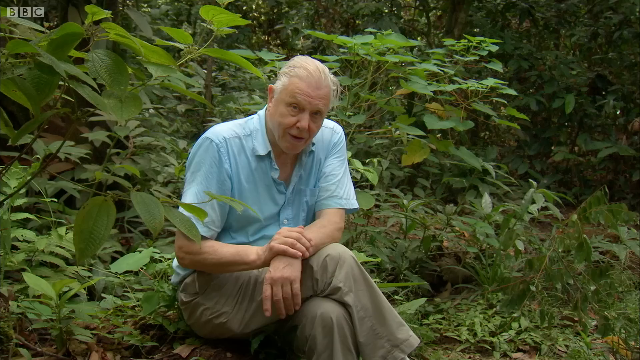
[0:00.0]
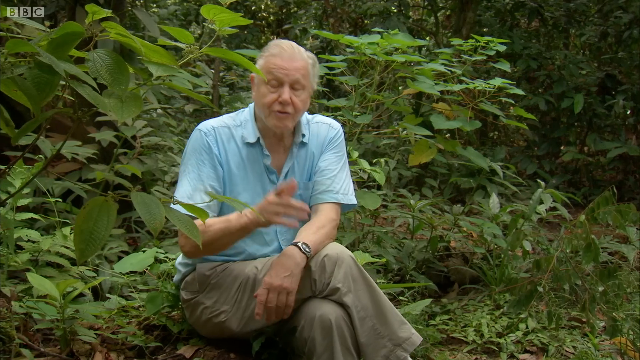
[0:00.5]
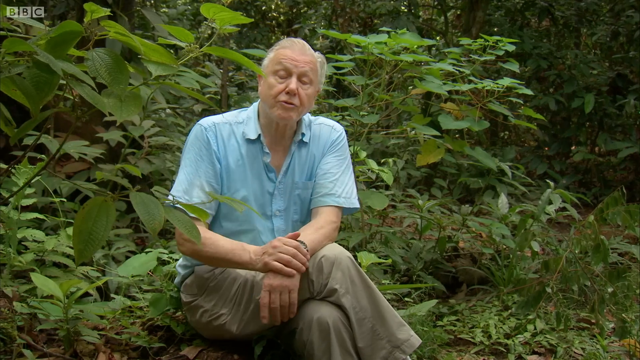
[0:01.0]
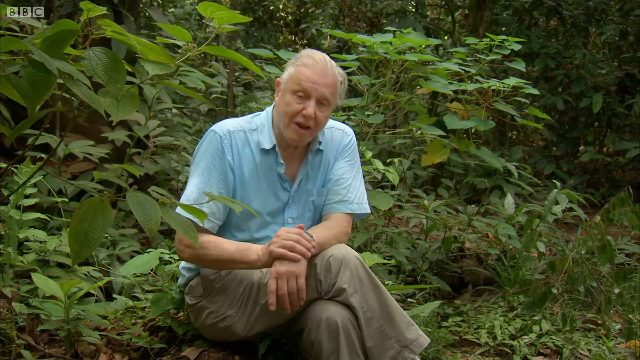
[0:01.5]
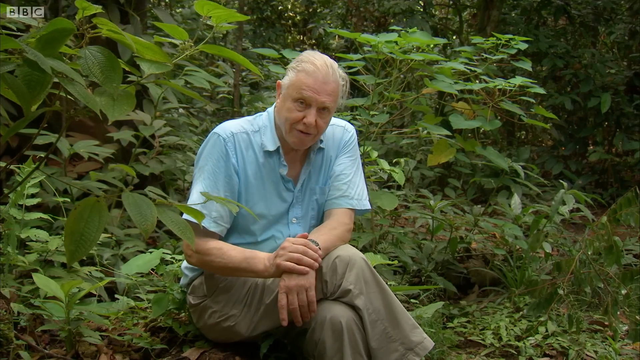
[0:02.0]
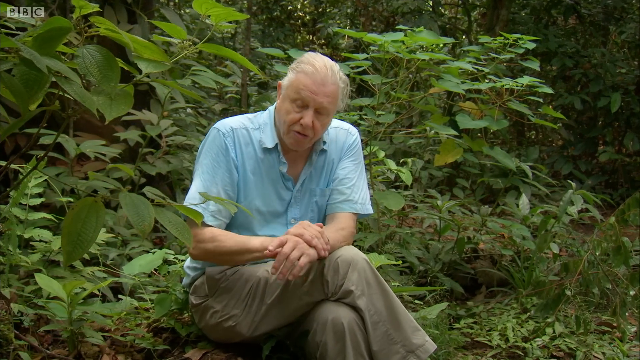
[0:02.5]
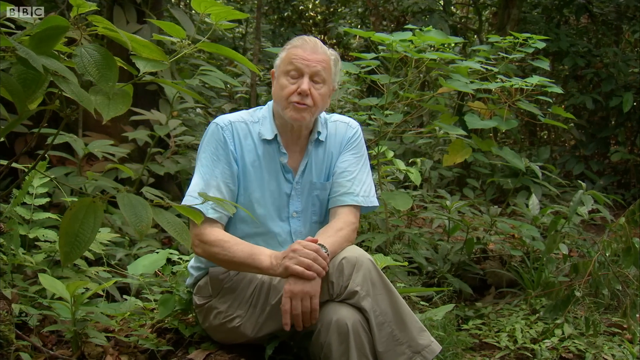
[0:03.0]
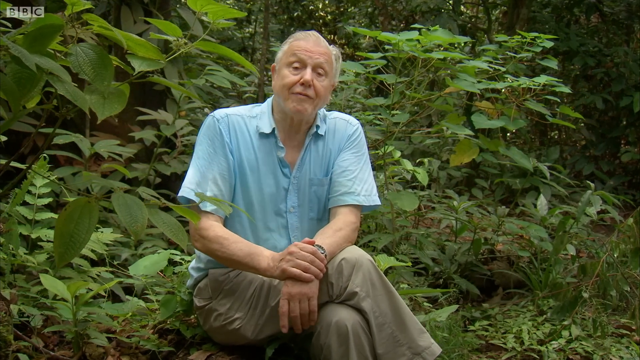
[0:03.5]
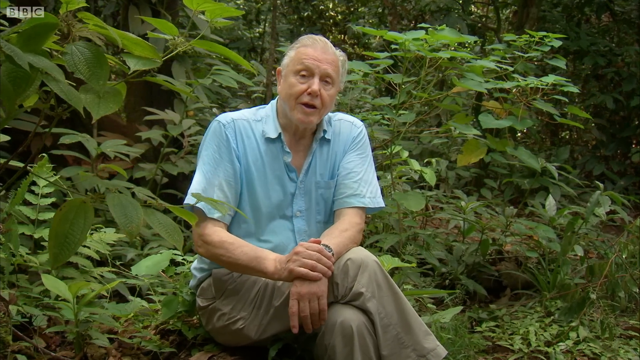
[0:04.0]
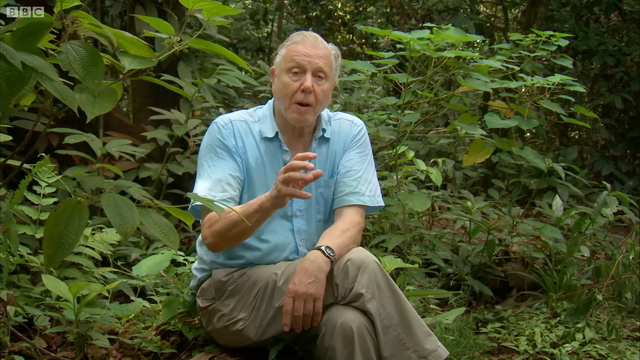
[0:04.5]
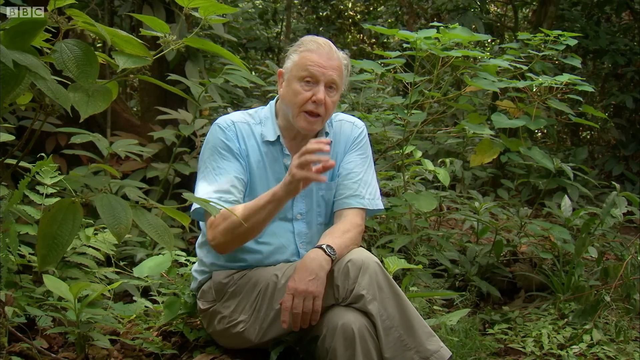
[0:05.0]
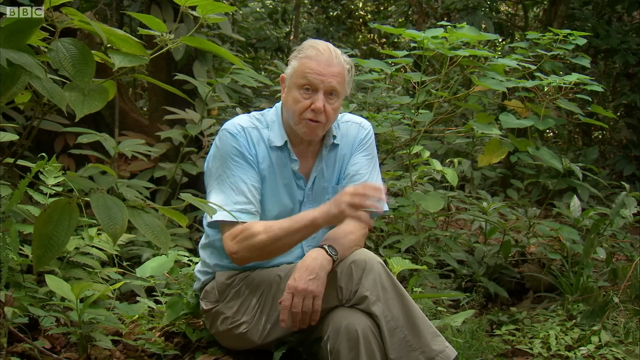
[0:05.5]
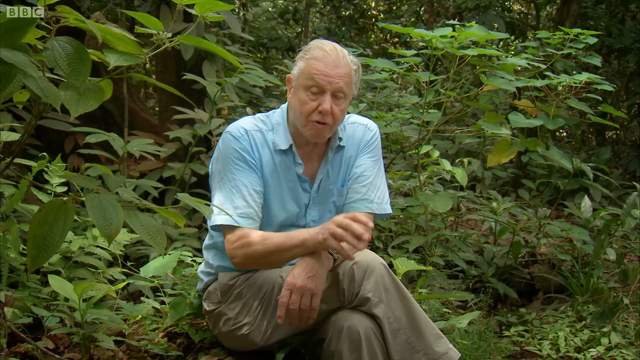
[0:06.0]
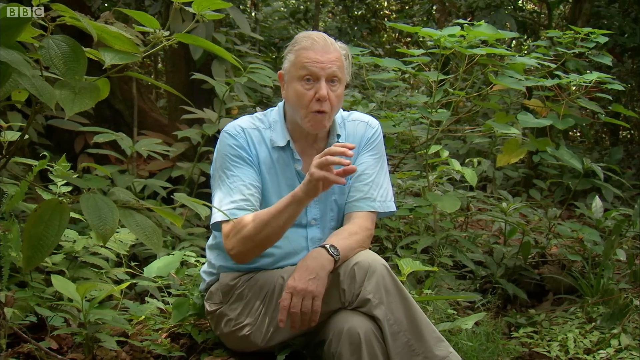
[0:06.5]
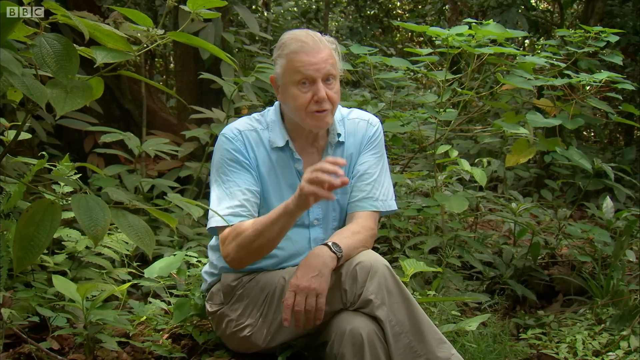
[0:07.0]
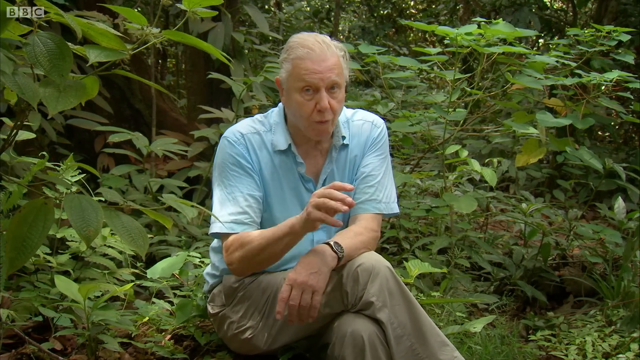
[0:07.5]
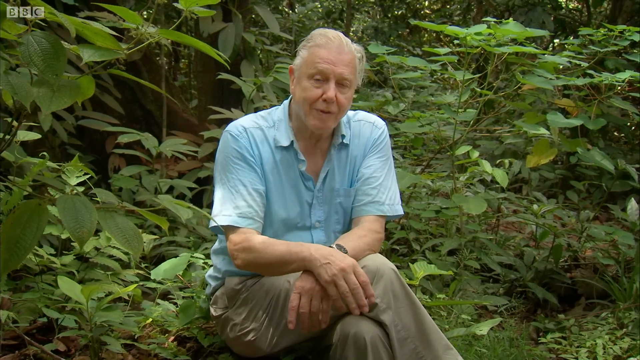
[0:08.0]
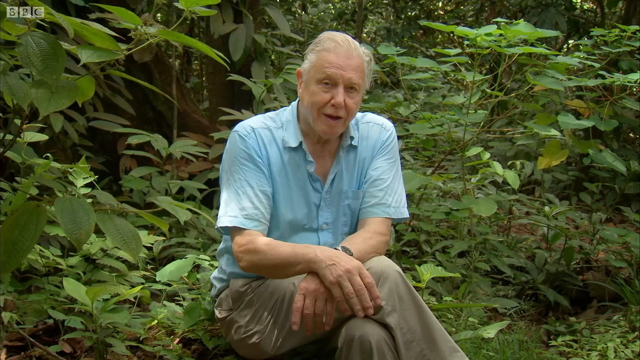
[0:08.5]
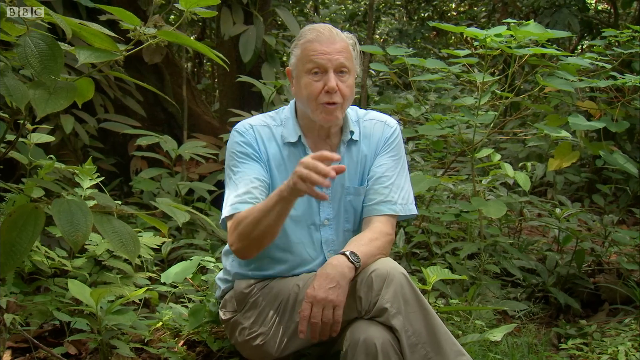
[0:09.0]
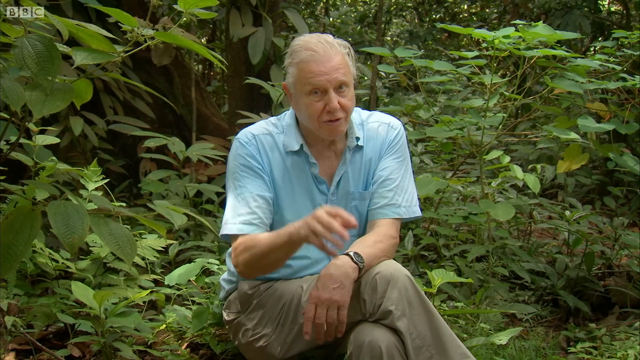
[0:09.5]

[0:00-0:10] The video opens with the BBC logo in the top left corner and the word "Subscribe" in small white text in the bottom right corner. An older man is sitting in what appears to be a forest in daylight. He has light skin and light gray thinning hair, and wears a light blue polo shirt, tan pants, and a black and silver wristwatch. He sits with his right leg crossed over his left, and the frame is cropped so that his feet are out of the scene. He is centered in the shot with greenery all around him. As he speaks, he nods his head slightly and gestures with his hands.